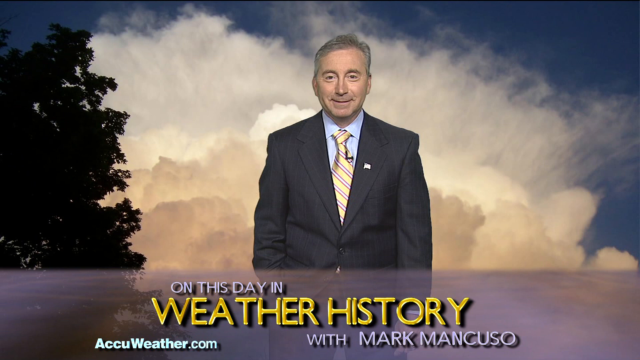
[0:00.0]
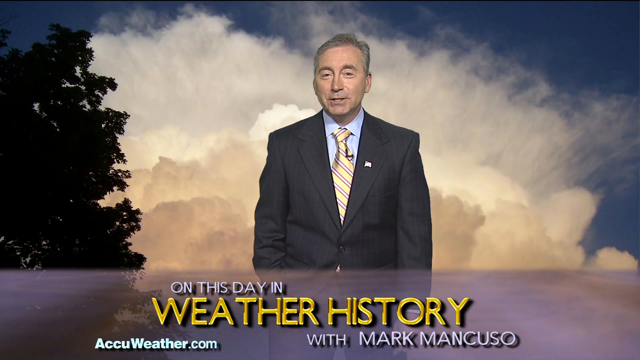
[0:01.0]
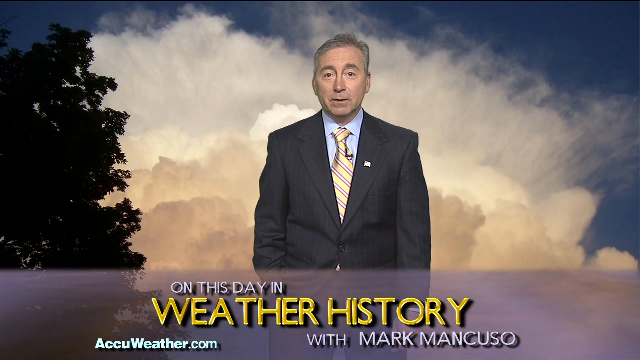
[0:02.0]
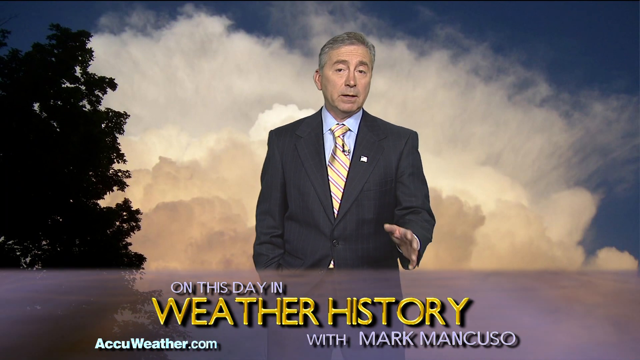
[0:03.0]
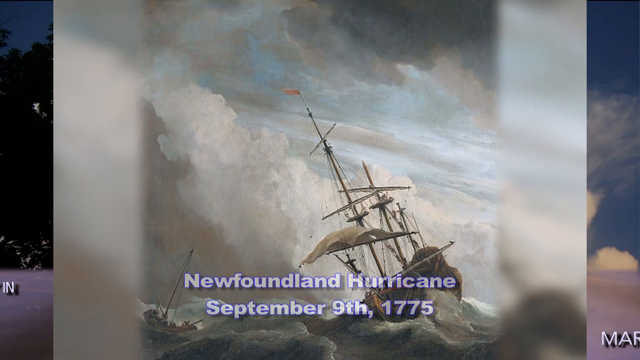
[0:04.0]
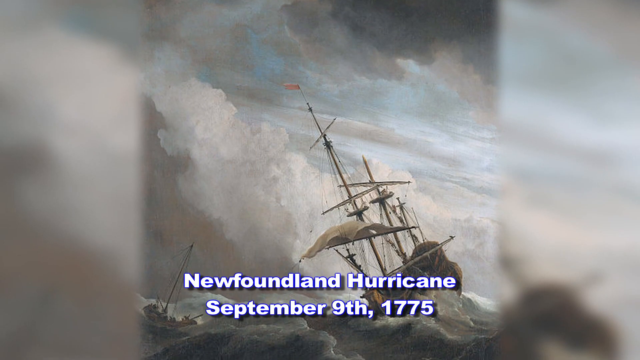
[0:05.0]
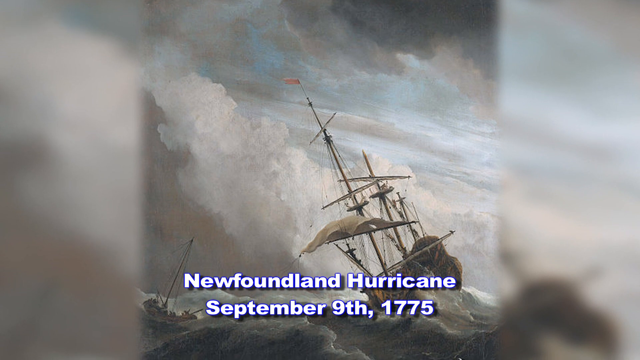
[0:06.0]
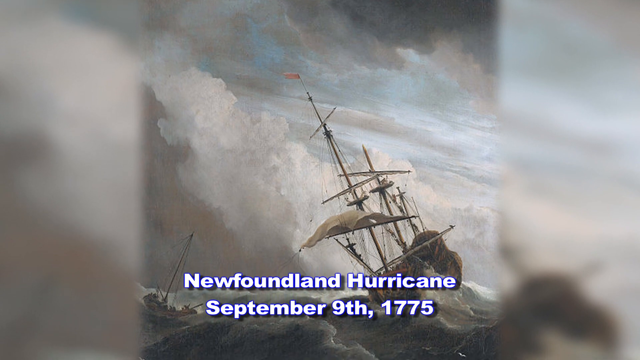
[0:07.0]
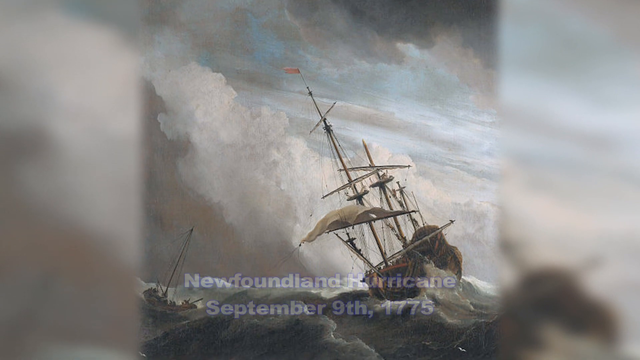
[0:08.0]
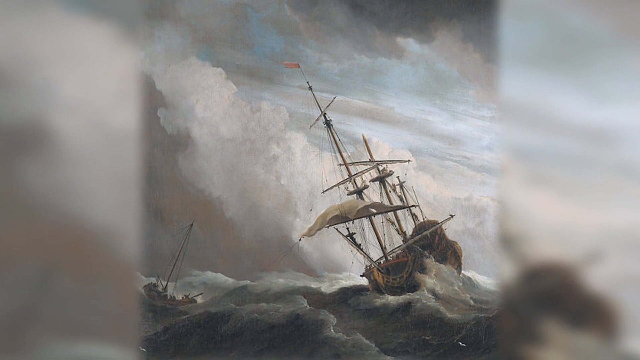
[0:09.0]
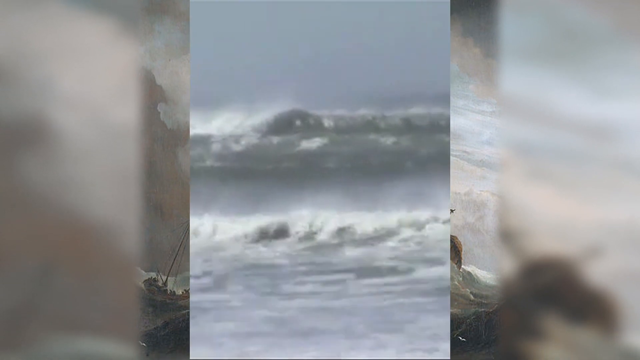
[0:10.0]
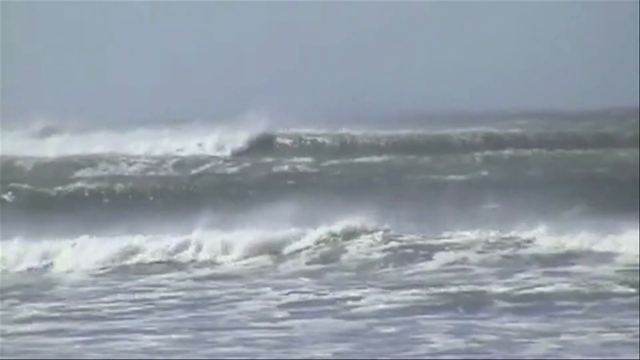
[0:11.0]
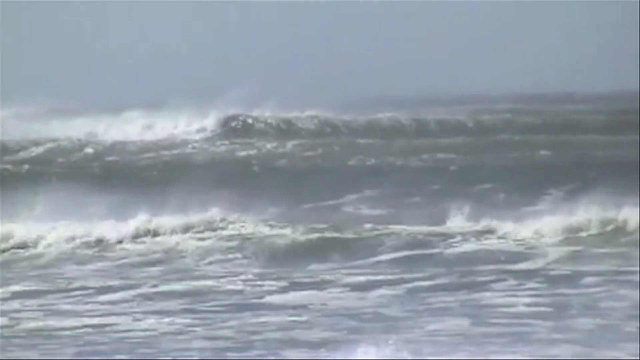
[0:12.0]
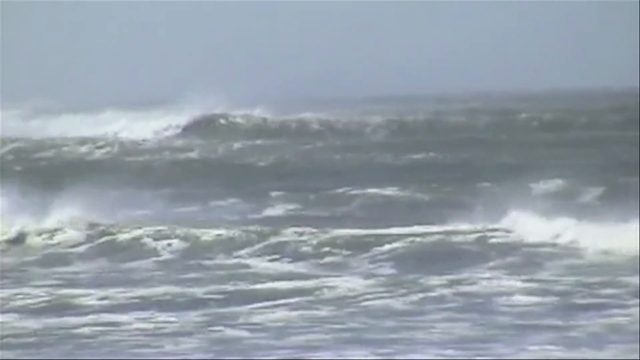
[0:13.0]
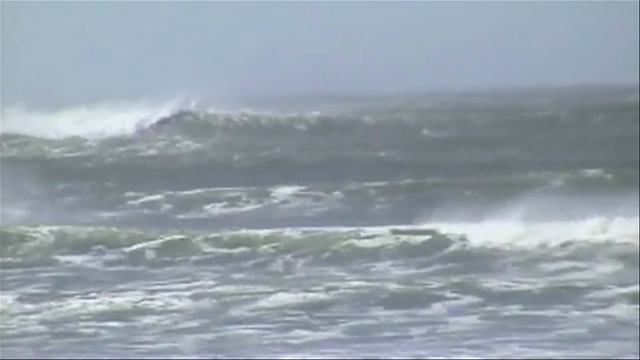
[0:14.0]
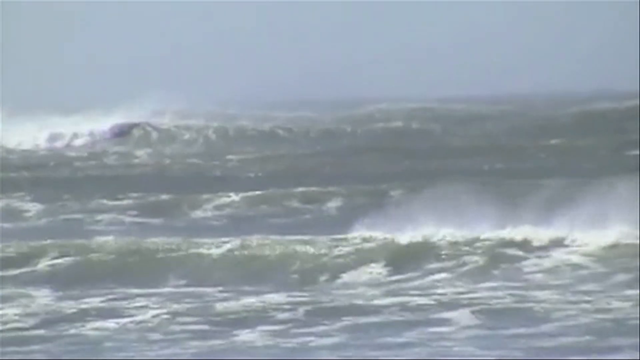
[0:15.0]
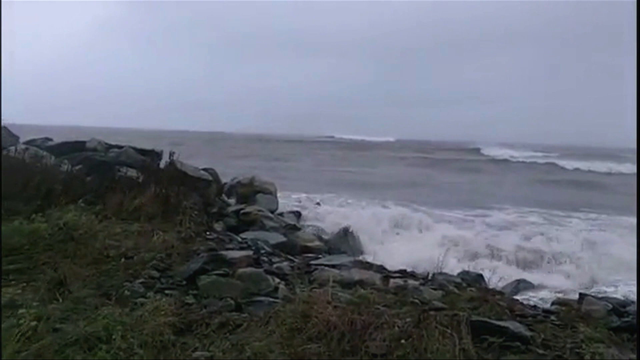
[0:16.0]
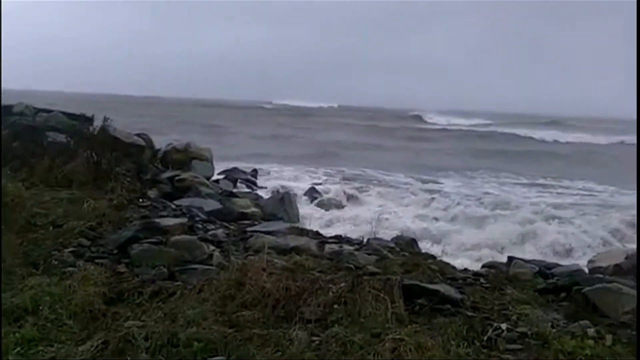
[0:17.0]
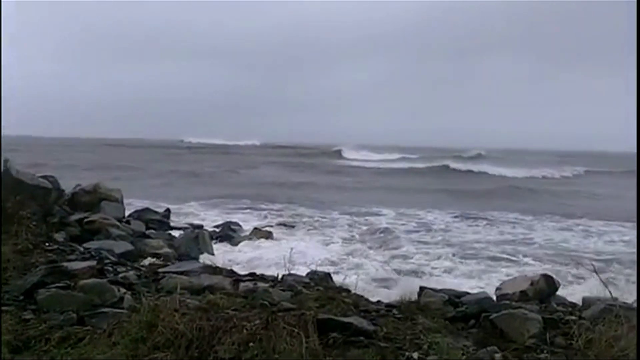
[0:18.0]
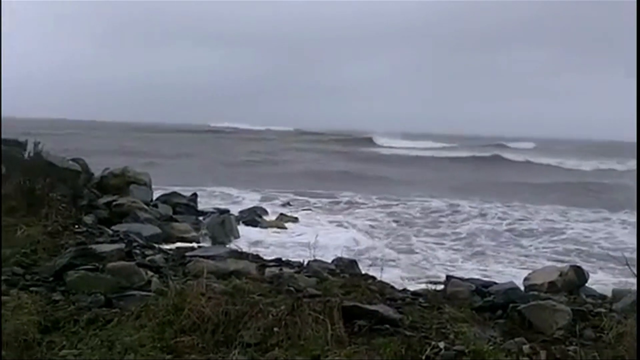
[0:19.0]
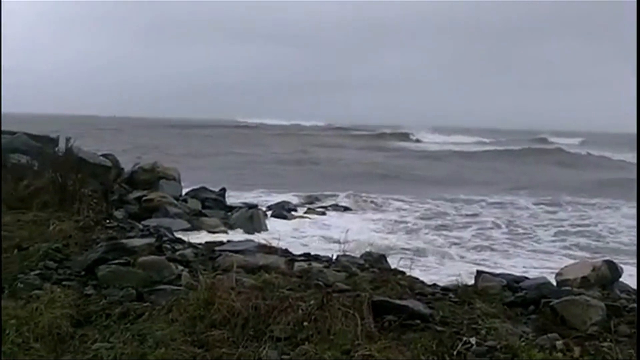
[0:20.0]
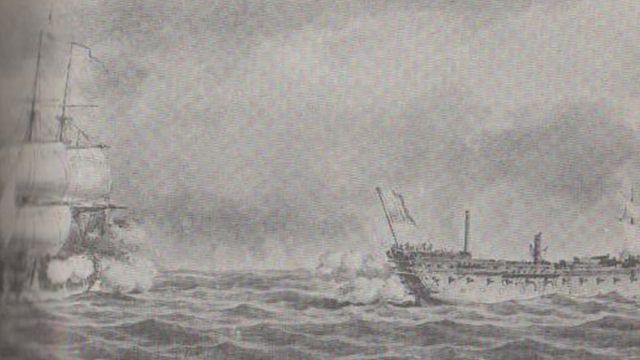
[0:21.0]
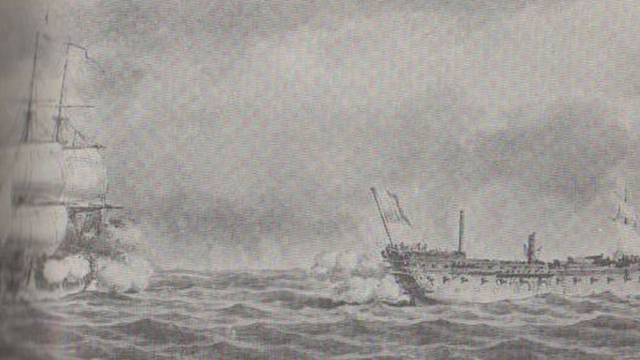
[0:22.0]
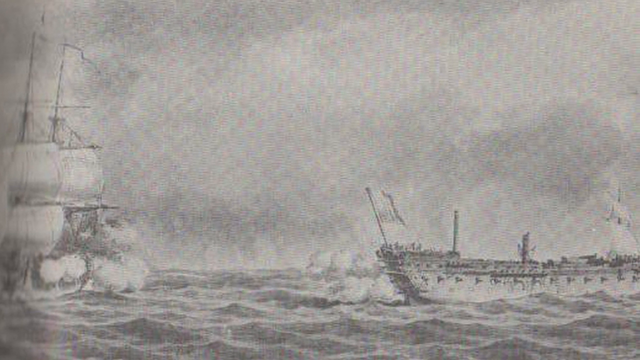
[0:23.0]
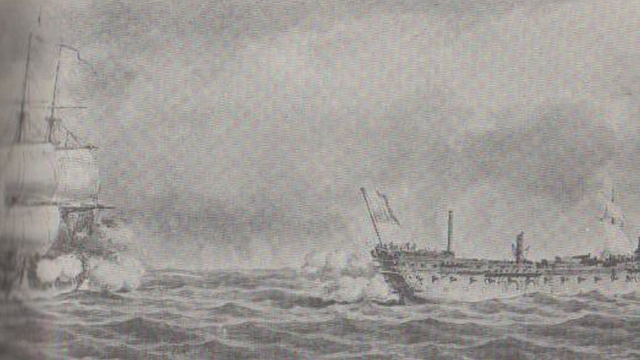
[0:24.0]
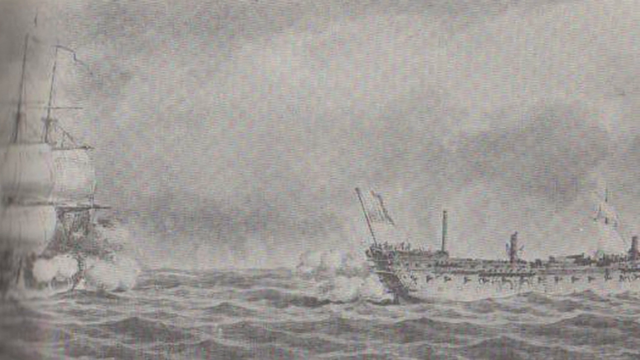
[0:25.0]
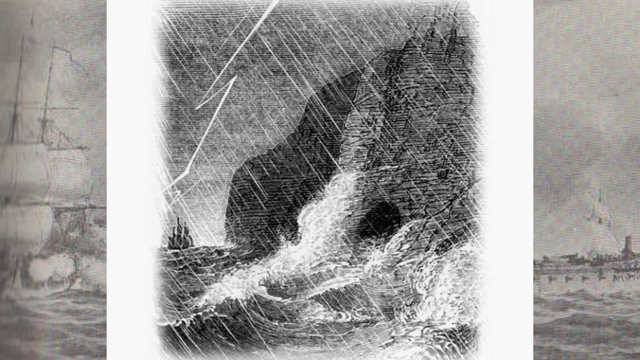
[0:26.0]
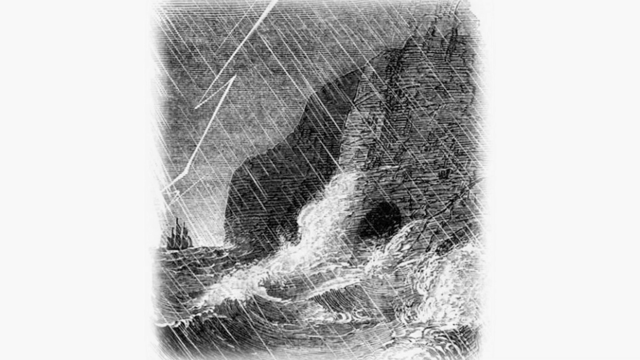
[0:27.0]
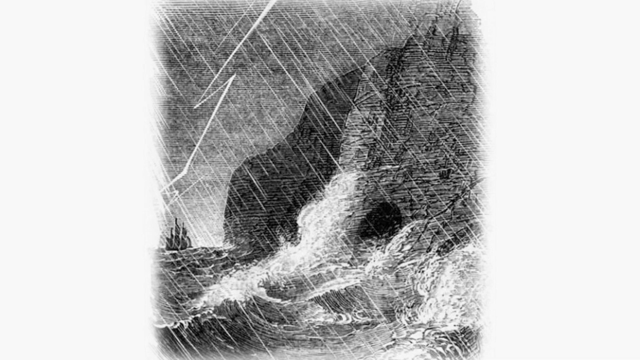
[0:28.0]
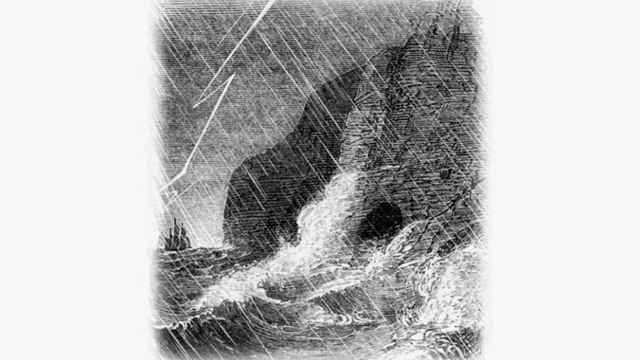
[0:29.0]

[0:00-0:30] A man in a suit stands directly in the middle of the frame, wearing a yellow striped tie, a blue shirt and a gray suit jacket. Behind him is a large cloud on a blue background, with a dark tree to his left. Text reads "On this day in weather history": "On this day in" is very small and "weather history" is yellow, on a purple see-through background, and the text looks dated, as if from the 80s or 90s. Next comes a painting of a ship rocking around on waves; it is very realistic but looks quite old, and the ship looks to be some kind of pirate ship or a ship that would have crossed the Atlantic Ocean many years ago, around 1775. The video cuts to violent, gray waves crashing, with two main waves visible. It then cuts to a beach with very large rocks and moss, where similarly gray, dark, foggy-colored waves crash onto the shore. Another drawing follows: a big ship with large sails on the left faces a ship with no sails on the right, the two looking directly at each other. The camera pans across and cuts to another drawing that looks to be of a cave being hit by many waves and rocks.